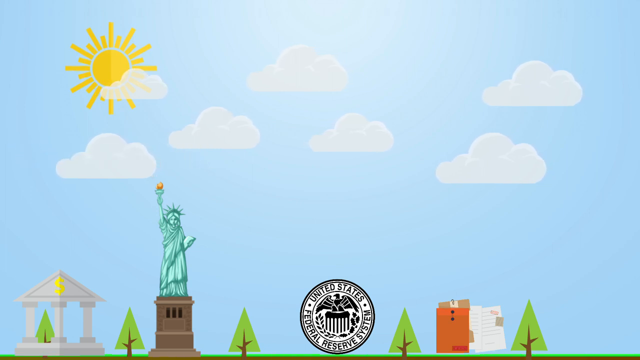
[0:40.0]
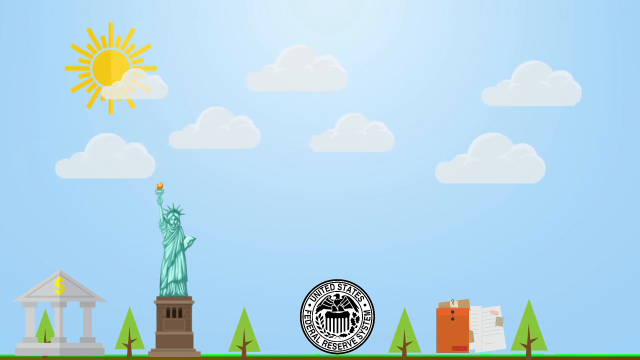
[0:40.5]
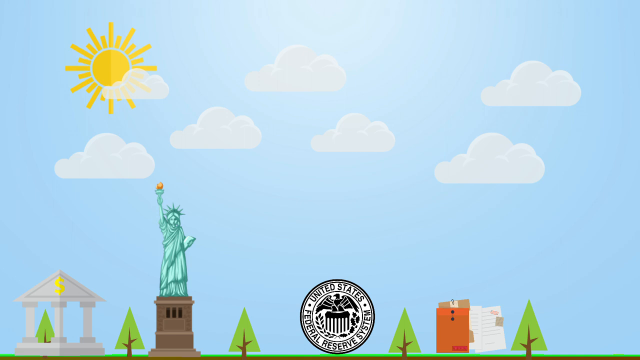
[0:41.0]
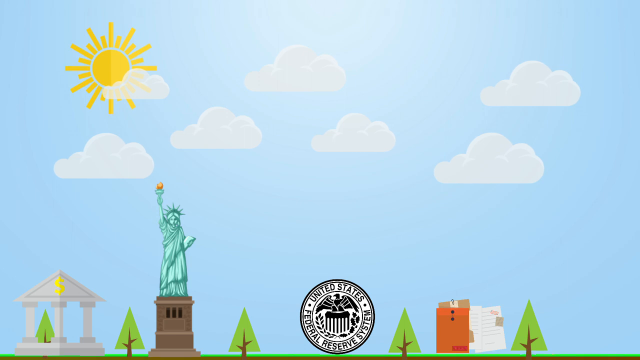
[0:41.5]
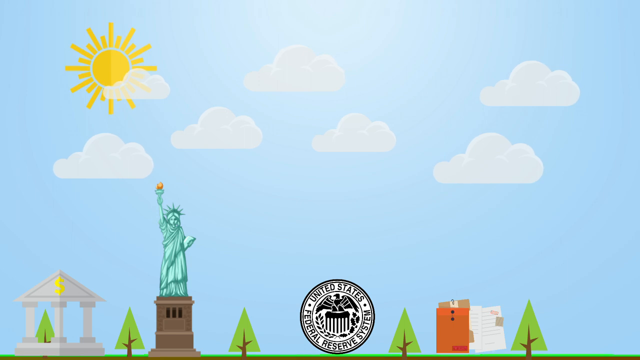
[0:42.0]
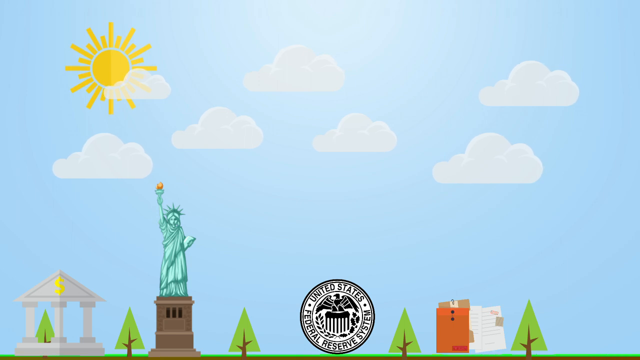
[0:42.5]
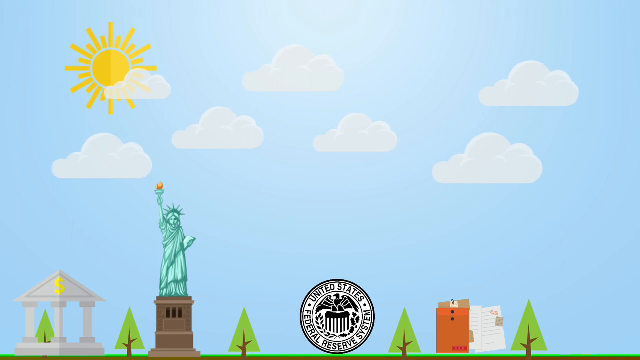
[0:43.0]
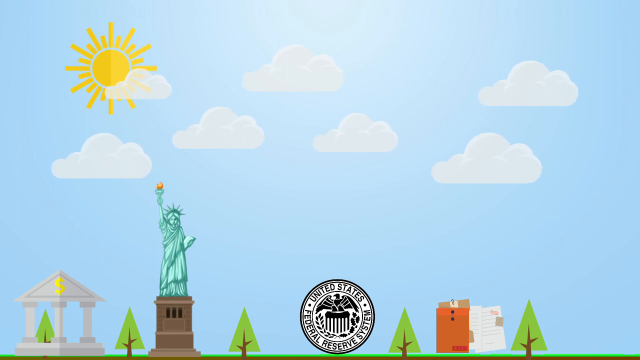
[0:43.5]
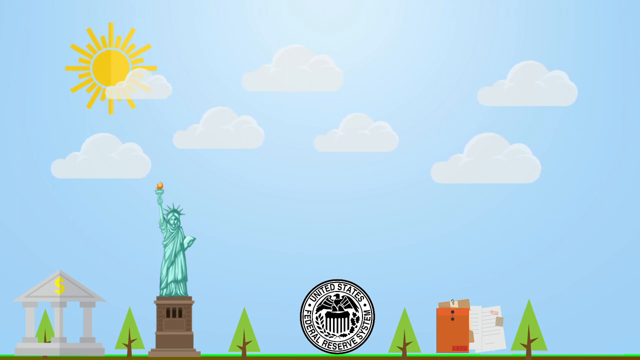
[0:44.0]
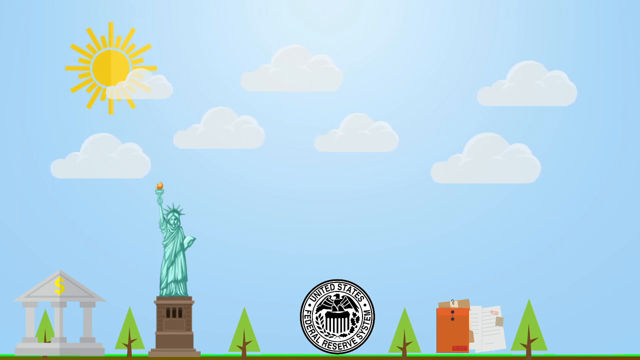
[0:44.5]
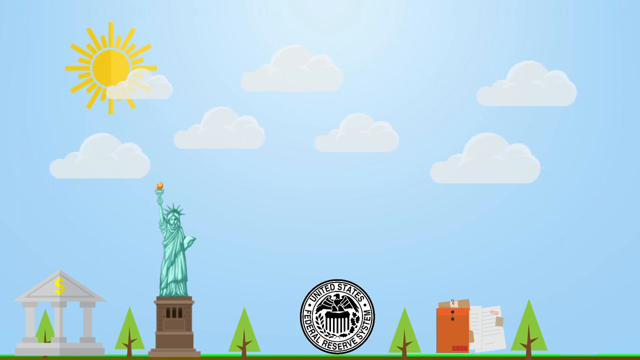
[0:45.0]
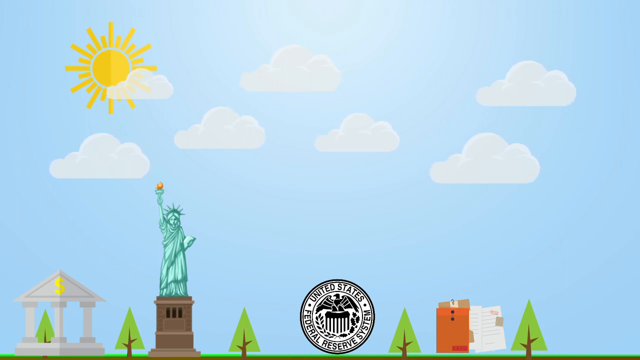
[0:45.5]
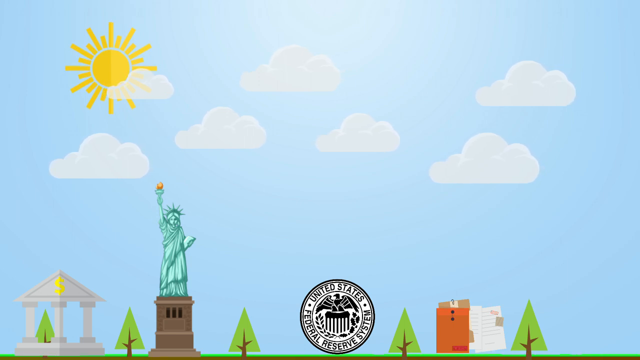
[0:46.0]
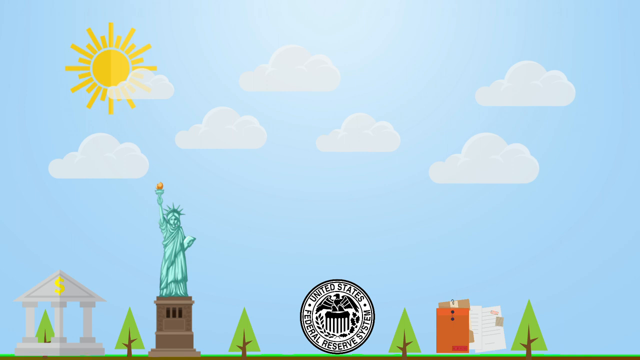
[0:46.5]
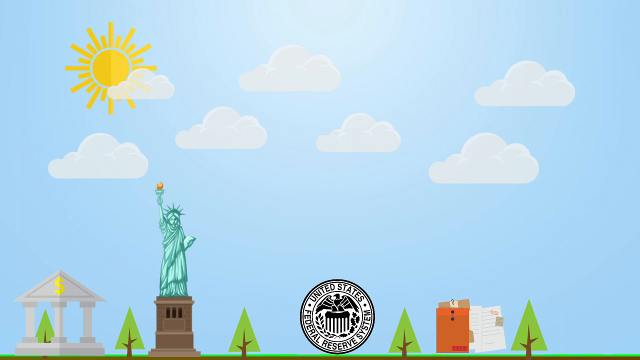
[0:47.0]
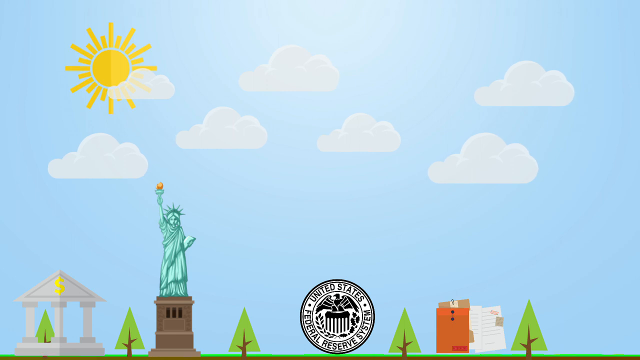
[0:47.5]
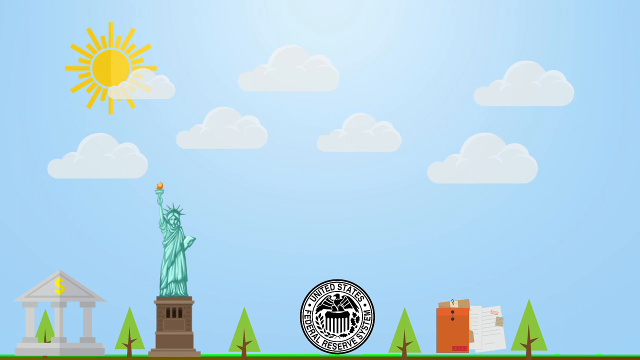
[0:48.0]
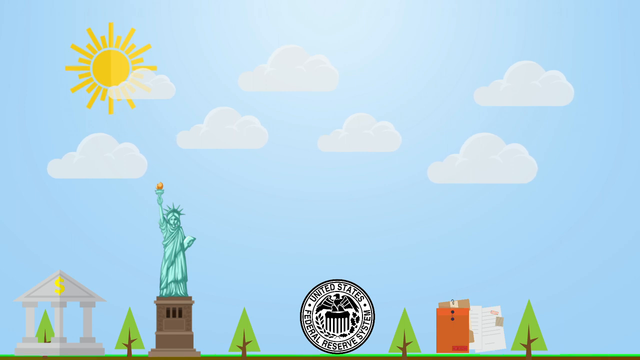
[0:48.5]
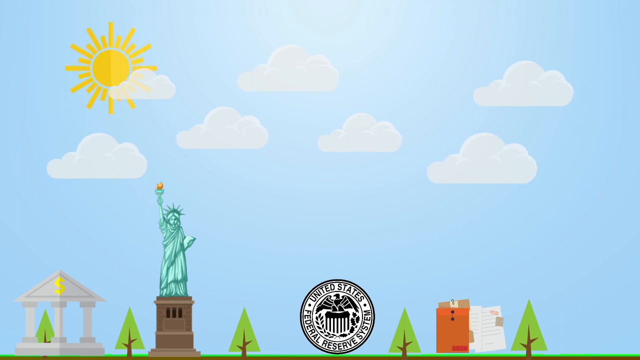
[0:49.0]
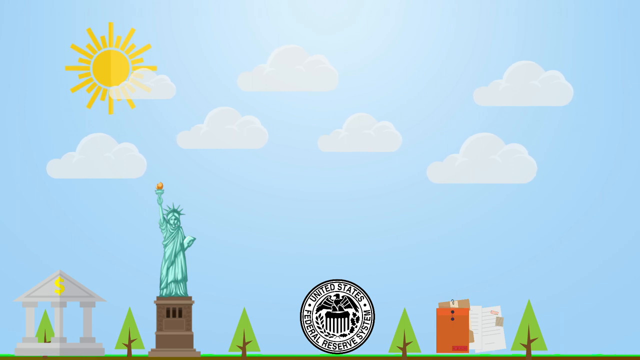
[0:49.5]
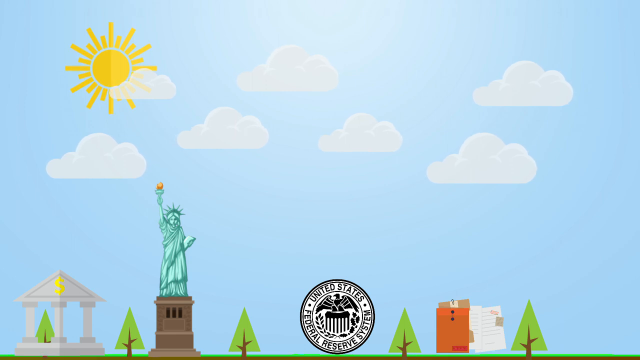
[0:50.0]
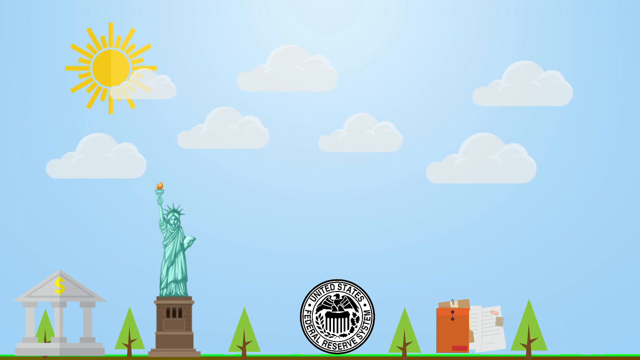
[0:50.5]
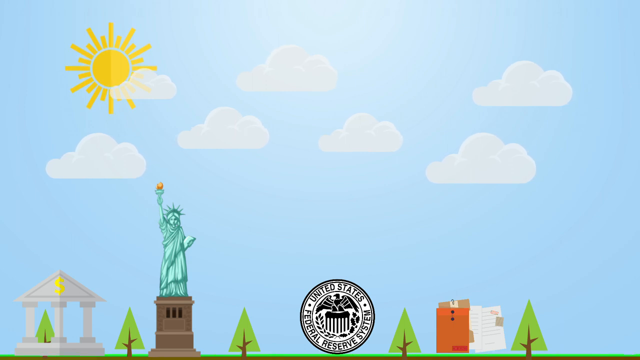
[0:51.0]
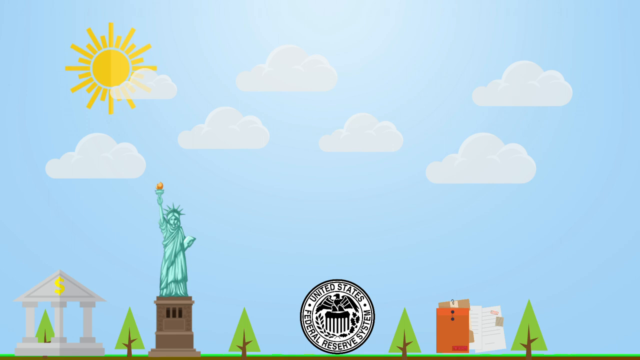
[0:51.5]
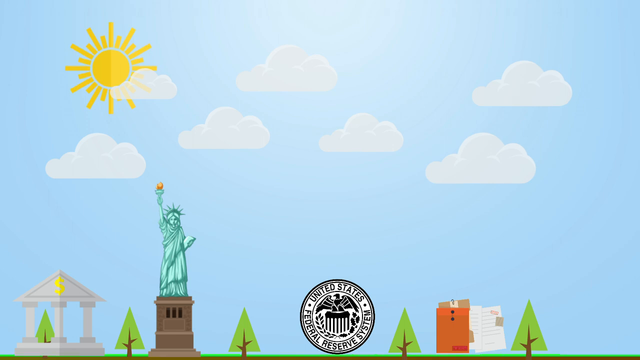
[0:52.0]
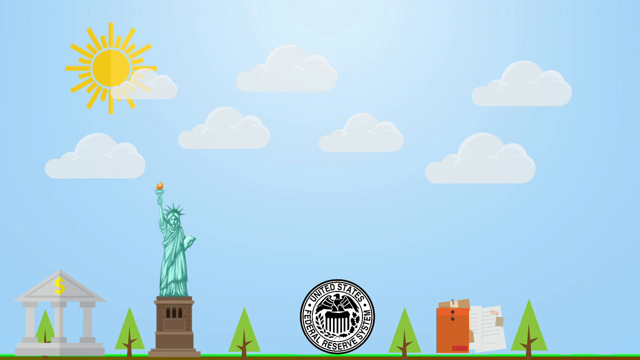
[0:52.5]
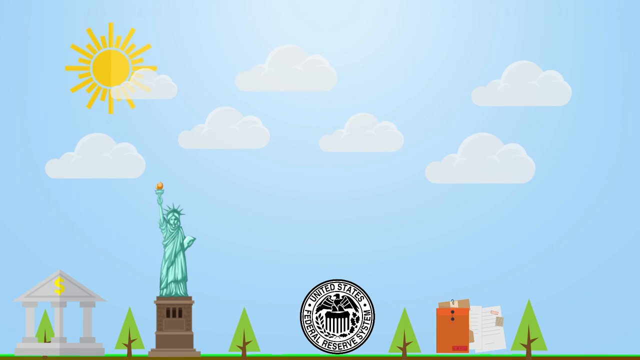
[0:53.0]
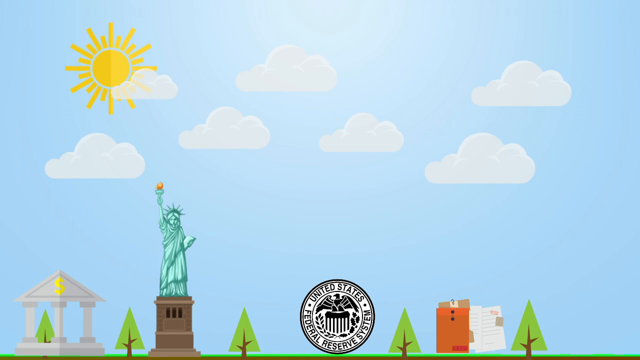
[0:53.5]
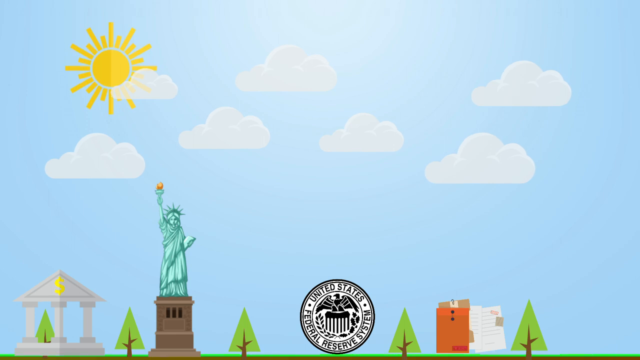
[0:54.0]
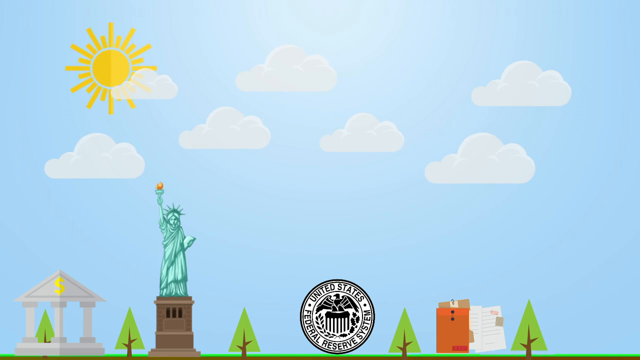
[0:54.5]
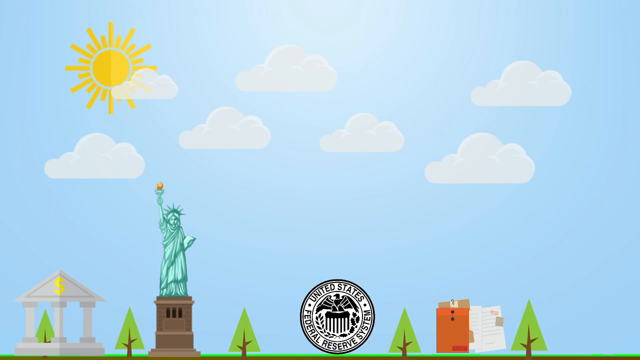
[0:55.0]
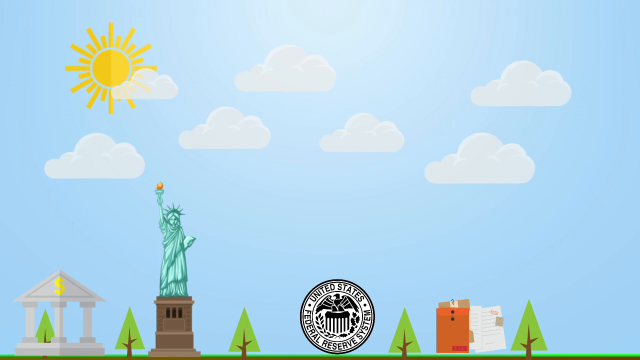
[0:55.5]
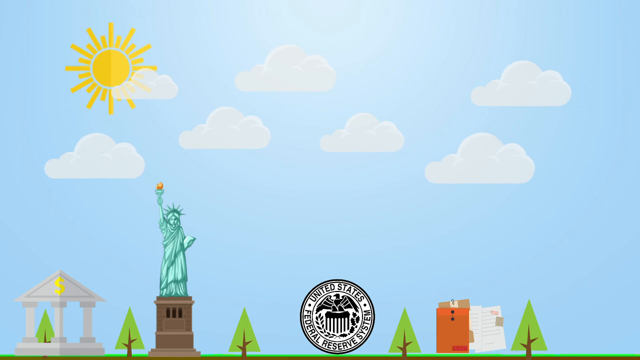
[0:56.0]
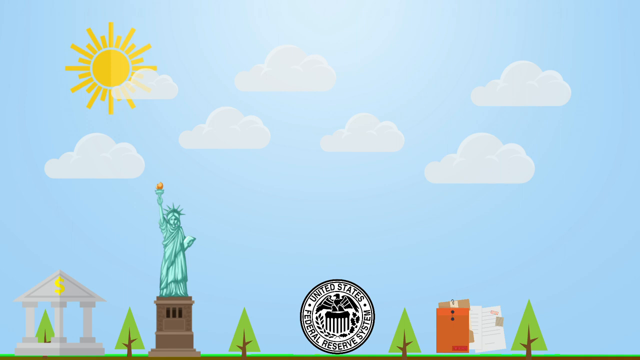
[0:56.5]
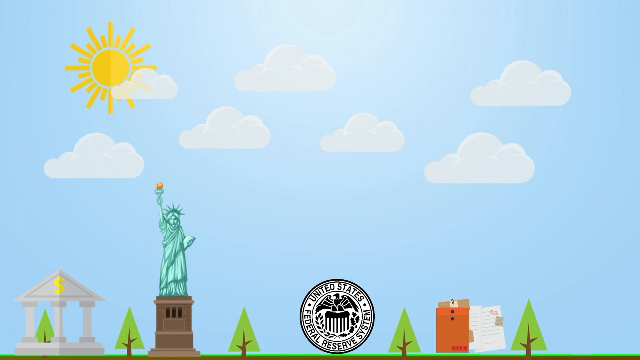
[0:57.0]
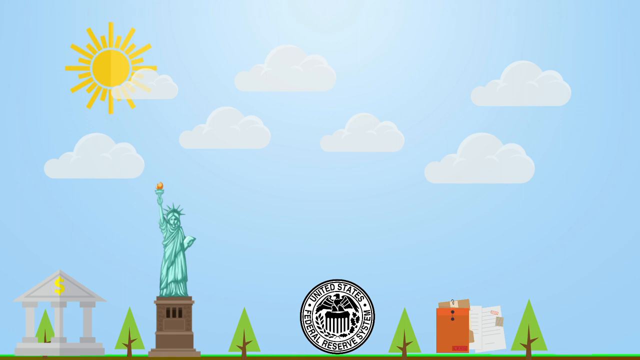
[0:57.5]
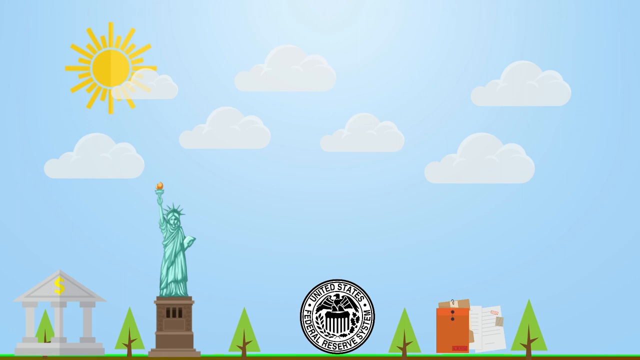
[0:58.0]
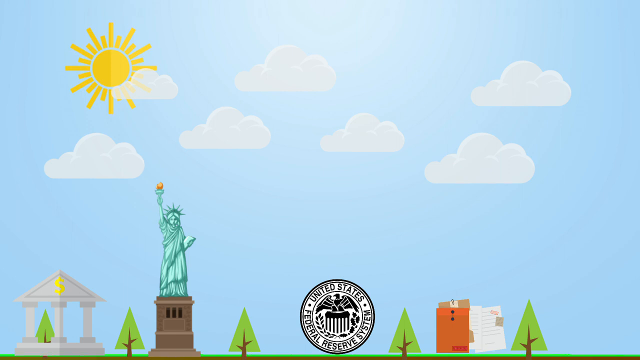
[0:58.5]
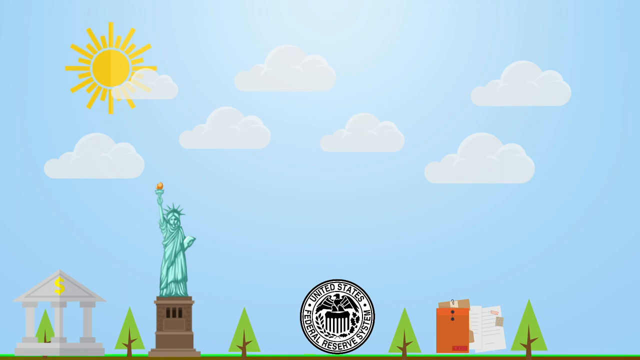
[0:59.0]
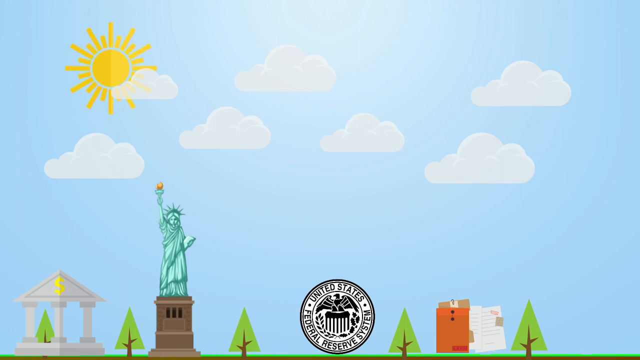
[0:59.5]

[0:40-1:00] The light blue sky shows six floating, fairly white clouds and a sun that is presumably shining and has two colors: its left side is dark golden and its right side is light golden. The green Statue of Liberty has one hand outstretched holding a torch; the torch handle is also green and the flame is a mix of red and yellow. The statue is holding a book. At the bottom of the video are additional images: a building with a dollar sign painted yellow; a circular emblem that says "United States Federal Reserve System", in a mix of white and blue, with an eagle in its center; a dossier that is orange with a touch of brown; and five trees shaded green with brown branches sticking out.